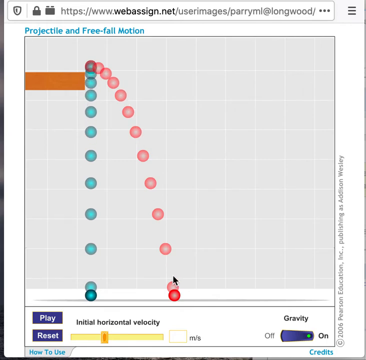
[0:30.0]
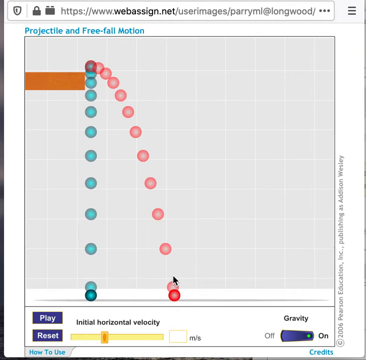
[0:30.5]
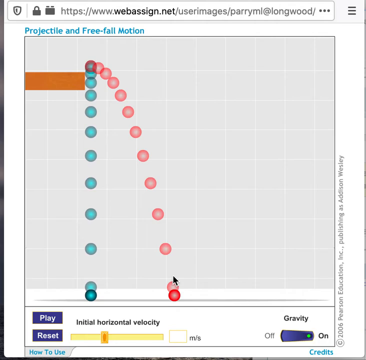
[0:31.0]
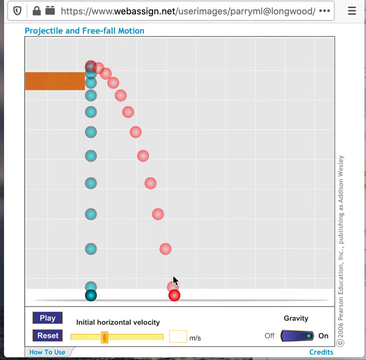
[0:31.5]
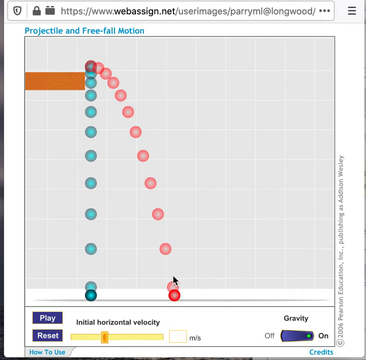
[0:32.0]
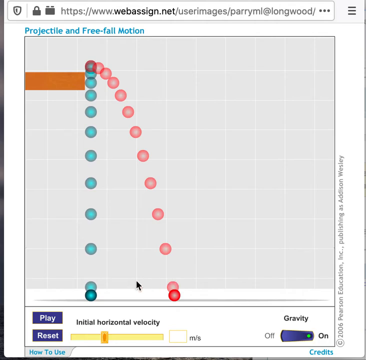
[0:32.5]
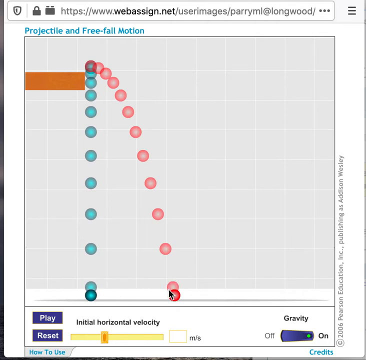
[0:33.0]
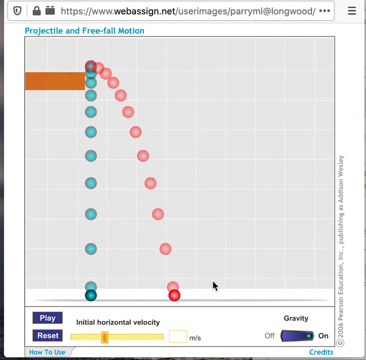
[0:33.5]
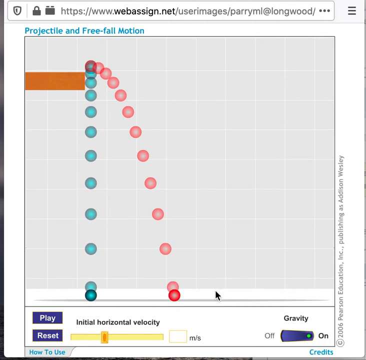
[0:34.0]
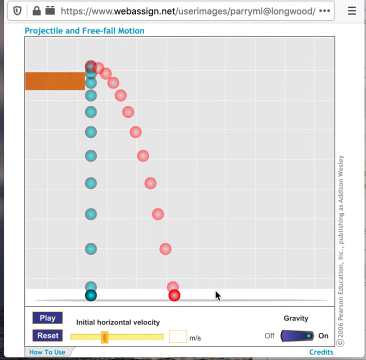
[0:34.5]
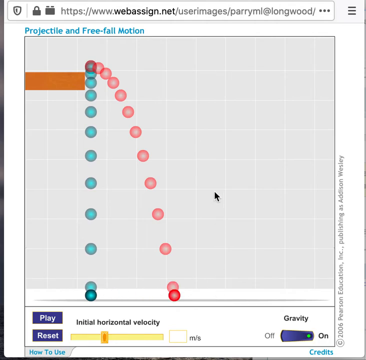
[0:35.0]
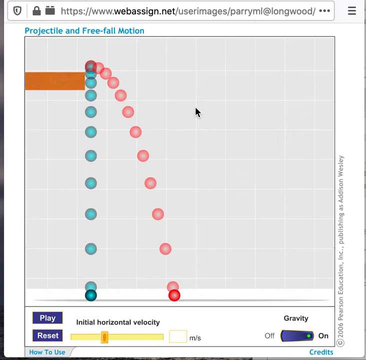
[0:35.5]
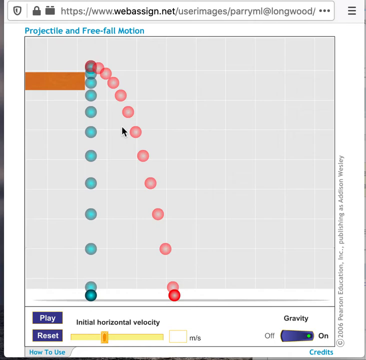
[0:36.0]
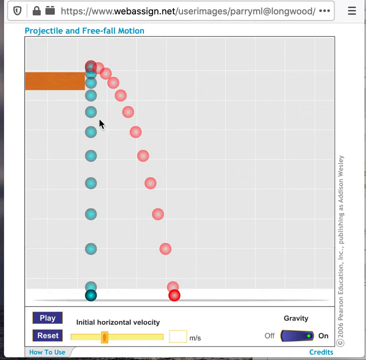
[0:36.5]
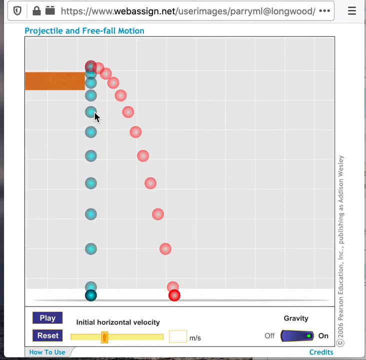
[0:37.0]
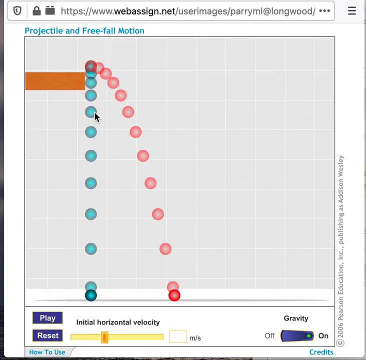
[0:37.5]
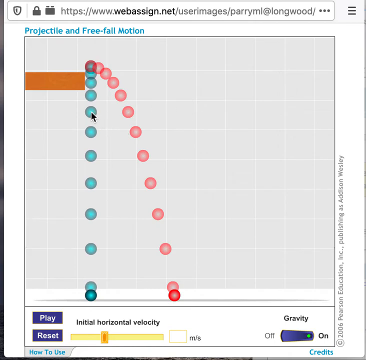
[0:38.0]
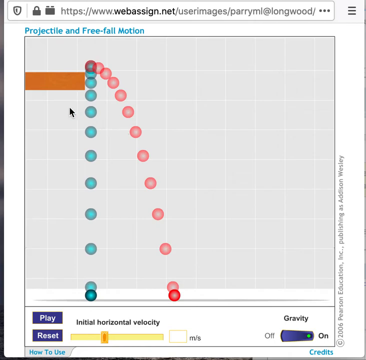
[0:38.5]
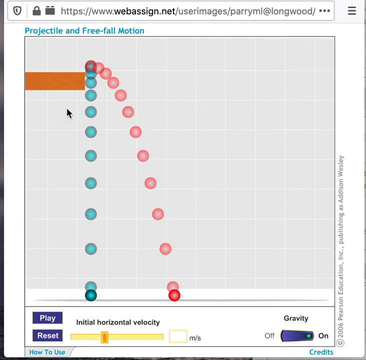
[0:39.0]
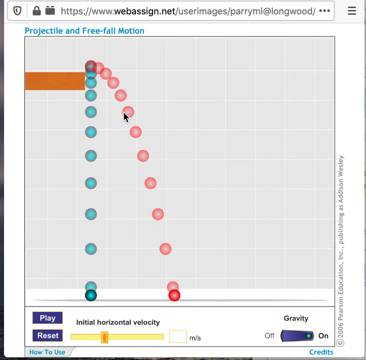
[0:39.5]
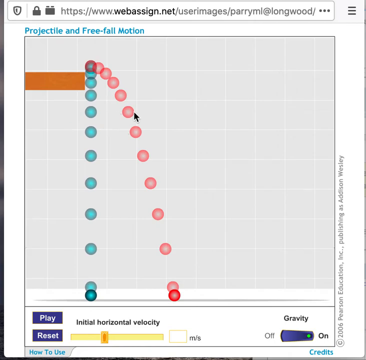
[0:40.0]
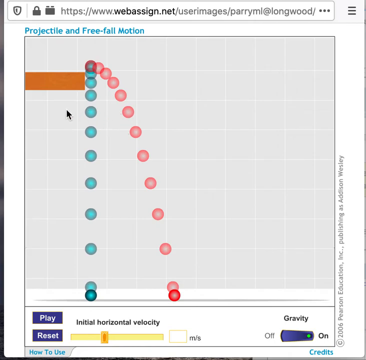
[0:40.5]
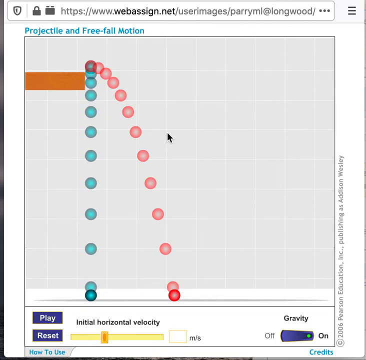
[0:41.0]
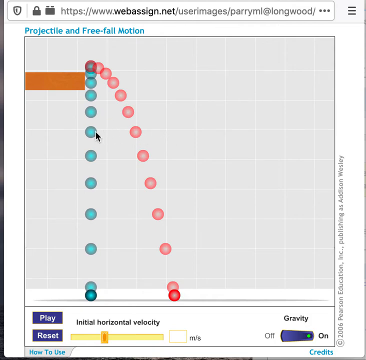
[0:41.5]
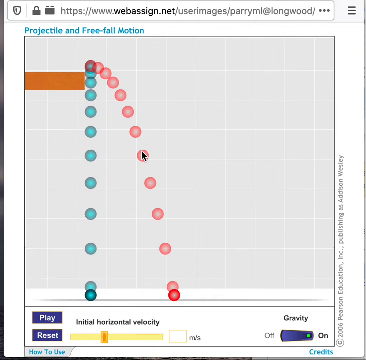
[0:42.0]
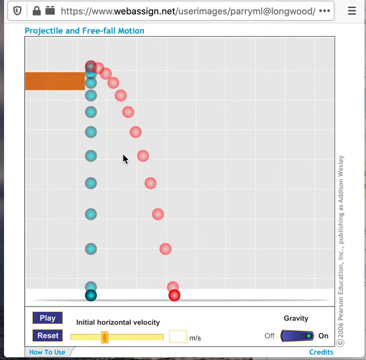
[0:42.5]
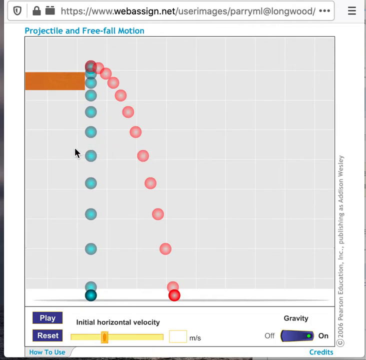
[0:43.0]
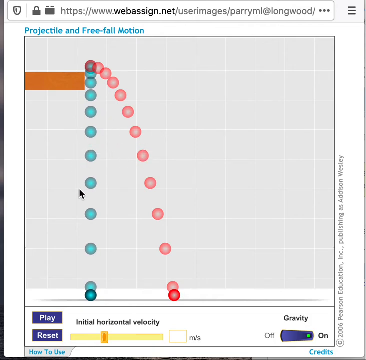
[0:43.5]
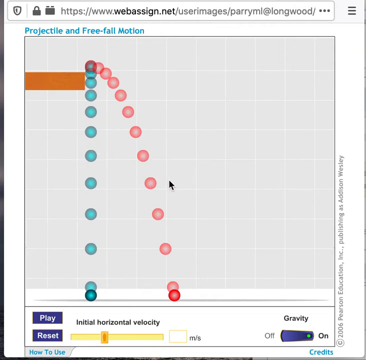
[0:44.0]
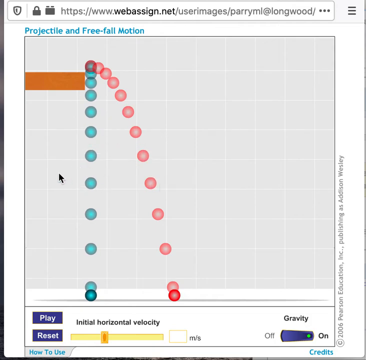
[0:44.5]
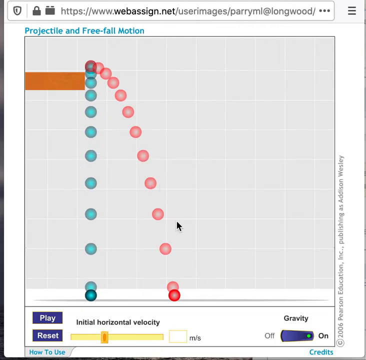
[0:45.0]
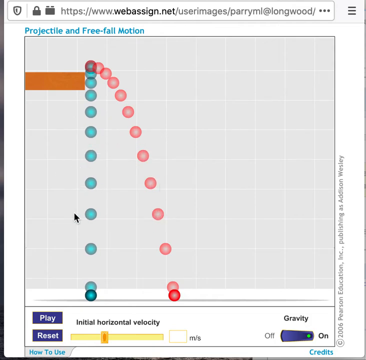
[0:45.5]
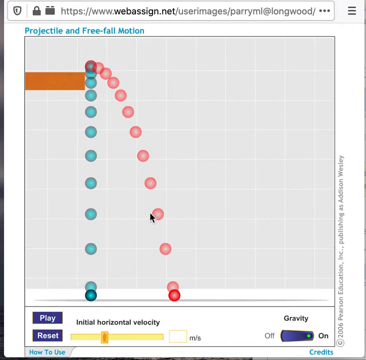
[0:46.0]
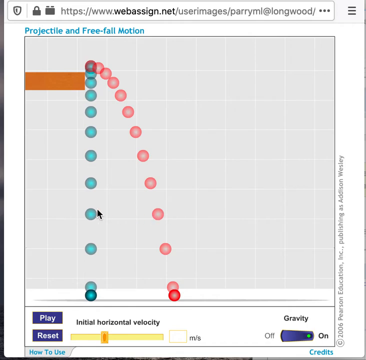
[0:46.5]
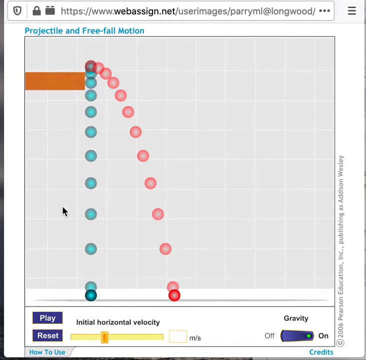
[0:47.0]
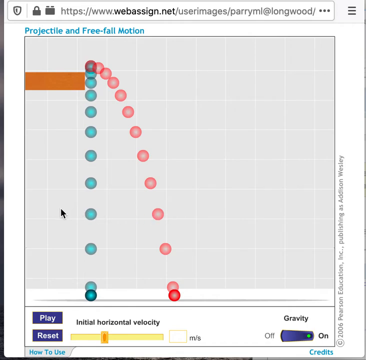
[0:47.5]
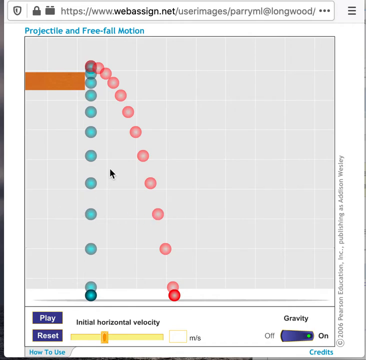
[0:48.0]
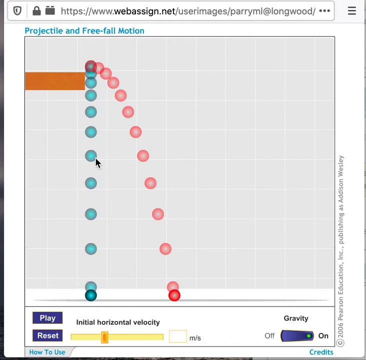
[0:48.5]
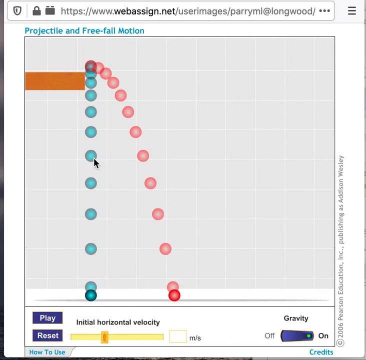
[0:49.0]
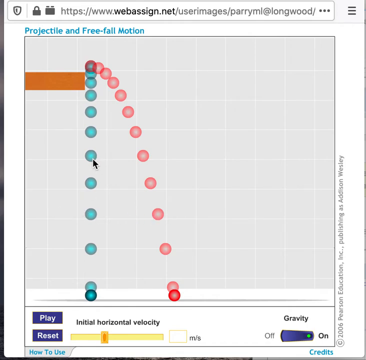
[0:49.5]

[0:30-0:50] A search bar at the top of the screen reads "www.webasign.net\user images". Below it is a screen made up of light gray squares running vertically and horizontally. At the bottom of the screen are two blue rectangles, one on top of the other: the top one has the word "play" in white and the bottom one has the word "reset" in white. To the right is a yellow line running left to right, with a darker yellow line running up and down across it, forming a switch that can be moved from left to right. Above that line, in black, are the words "initial horizontal velocity". In the bottom right-hand corner is a blue rectangle with "off" on its left side and "on" on its right side, and above it in black is the word "gravity". A black arrow moves around the gridded screen as someone moves the mouse. The person pushes the play button, and a blue ball and a red ball that are up on a brown rectangle at the top of the screen fall off and come down to the bottom of the screen.